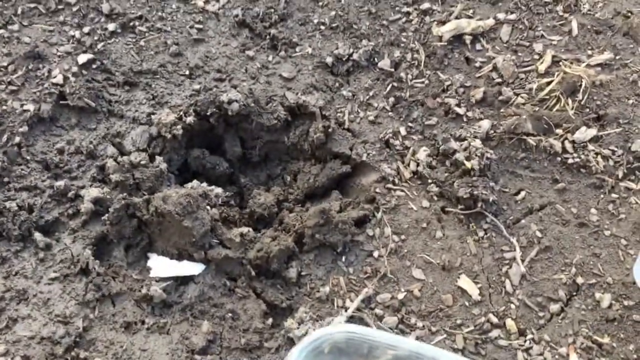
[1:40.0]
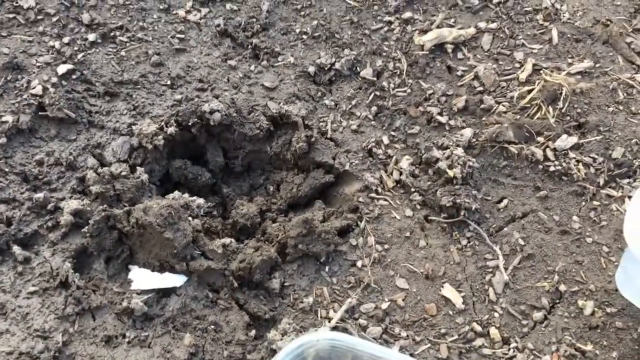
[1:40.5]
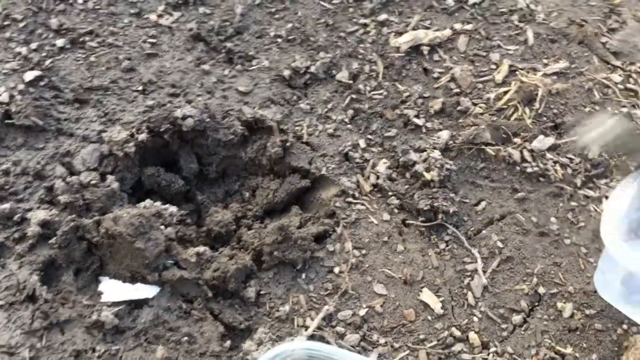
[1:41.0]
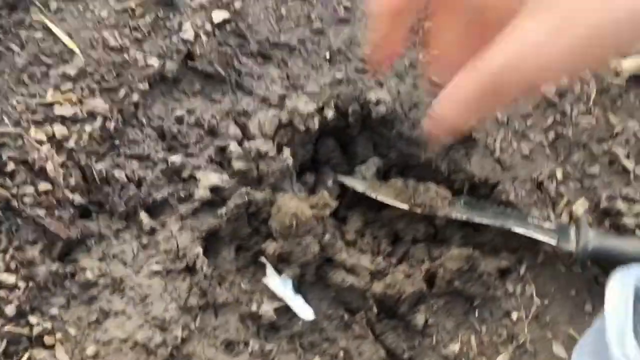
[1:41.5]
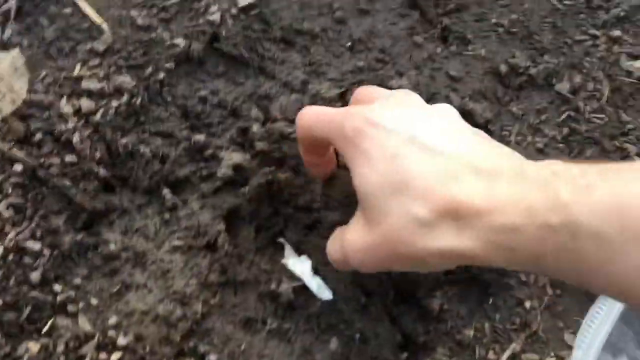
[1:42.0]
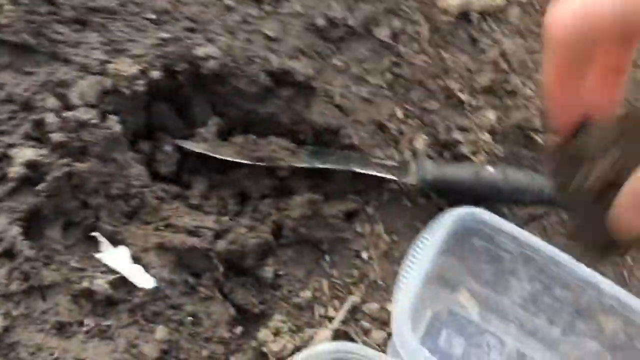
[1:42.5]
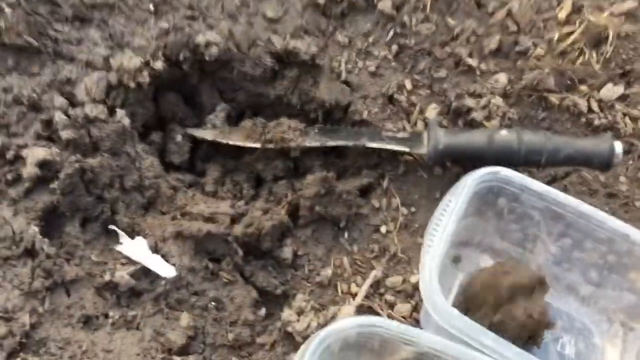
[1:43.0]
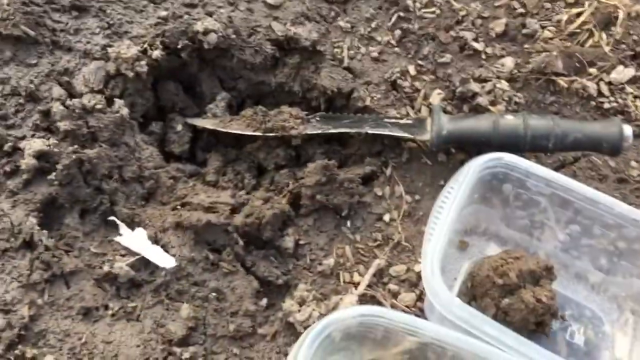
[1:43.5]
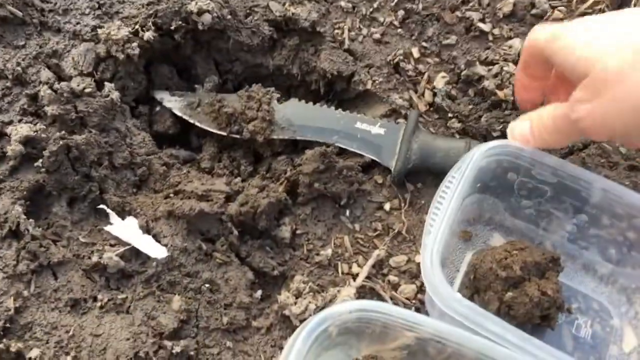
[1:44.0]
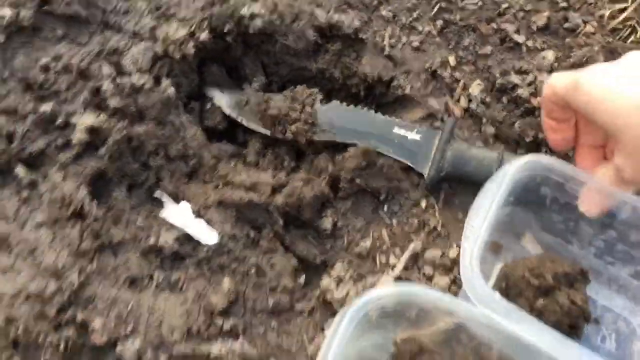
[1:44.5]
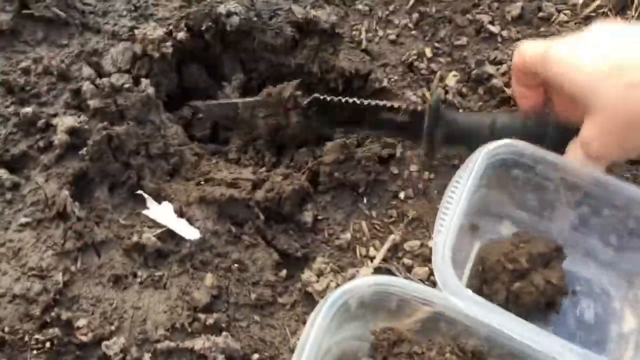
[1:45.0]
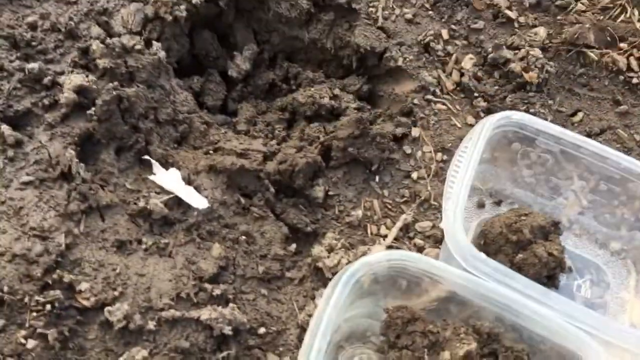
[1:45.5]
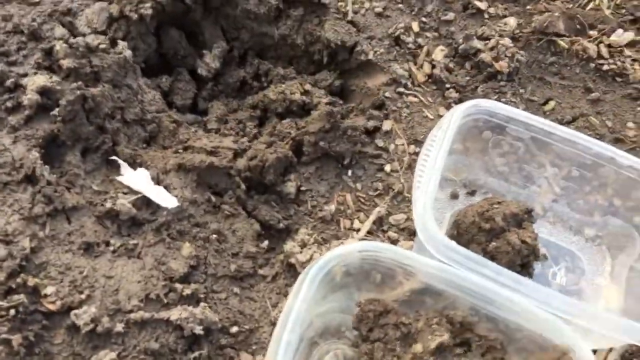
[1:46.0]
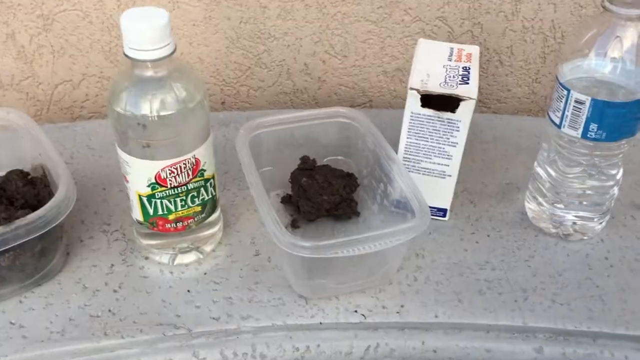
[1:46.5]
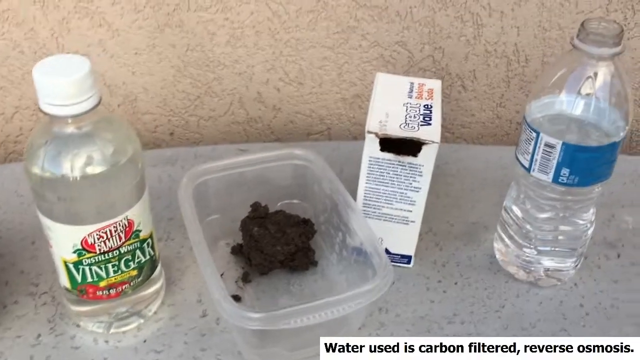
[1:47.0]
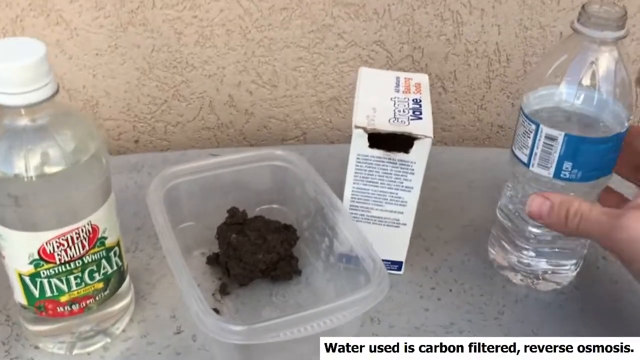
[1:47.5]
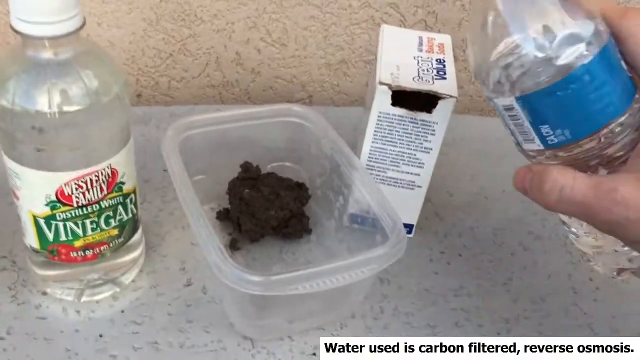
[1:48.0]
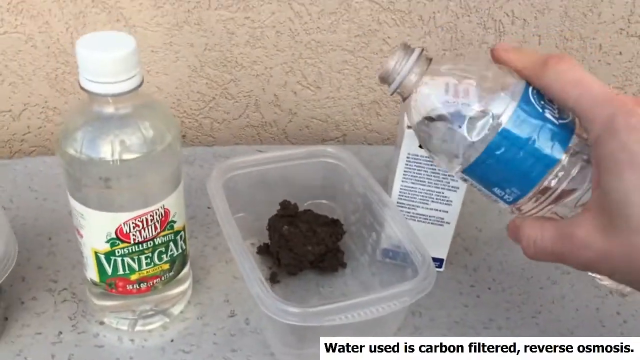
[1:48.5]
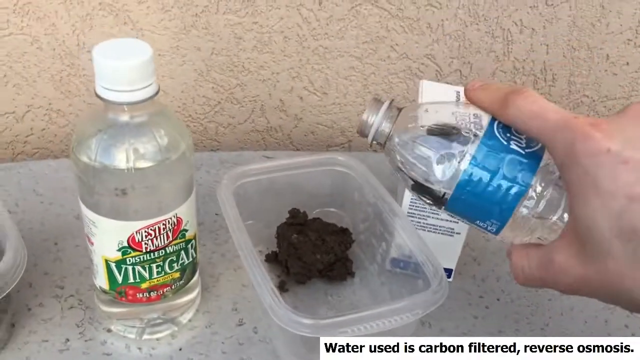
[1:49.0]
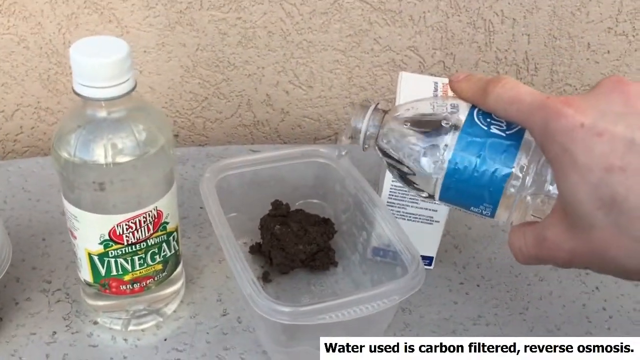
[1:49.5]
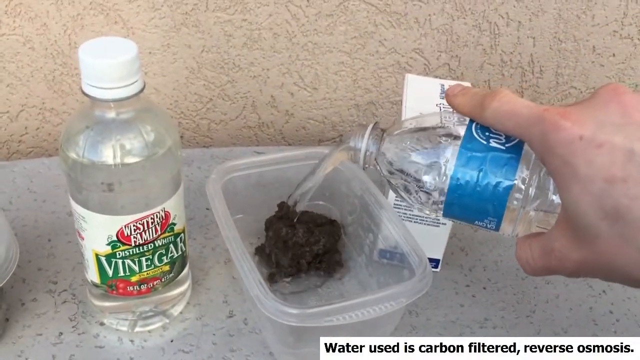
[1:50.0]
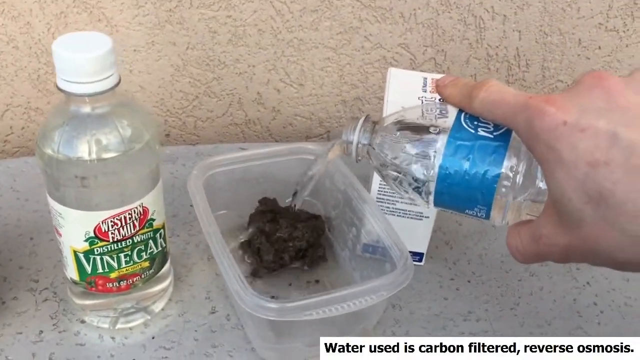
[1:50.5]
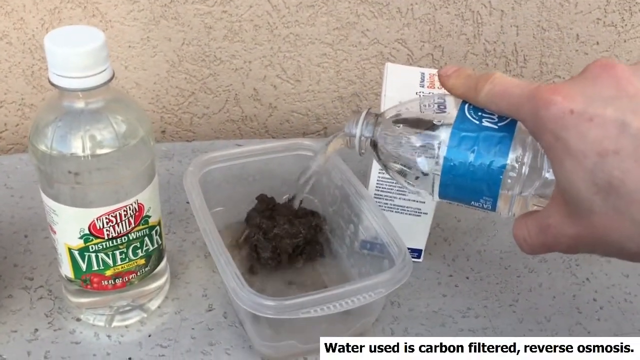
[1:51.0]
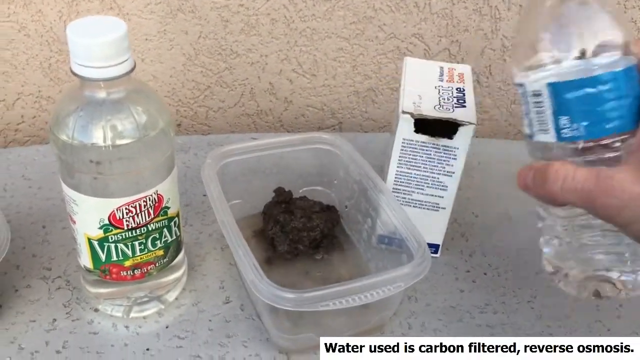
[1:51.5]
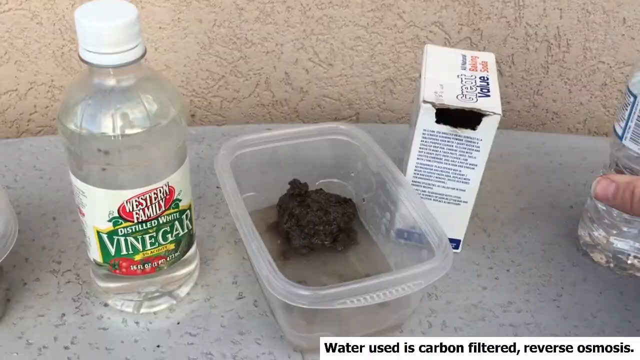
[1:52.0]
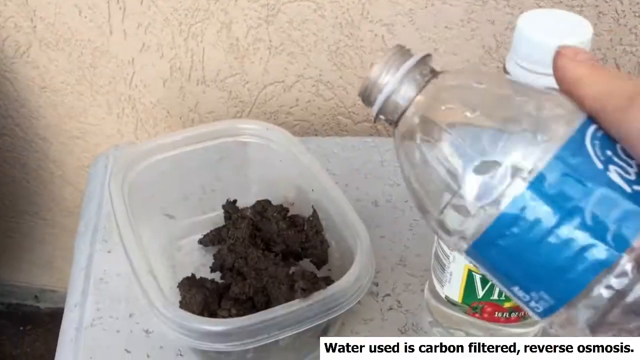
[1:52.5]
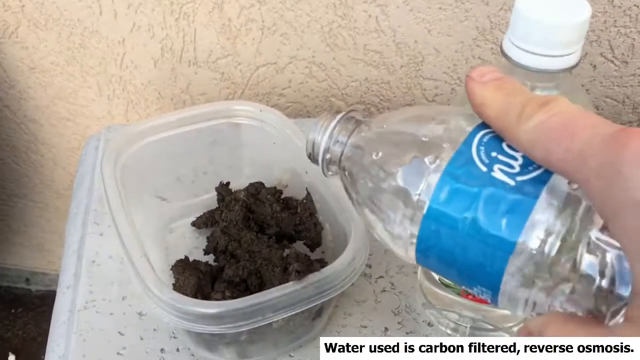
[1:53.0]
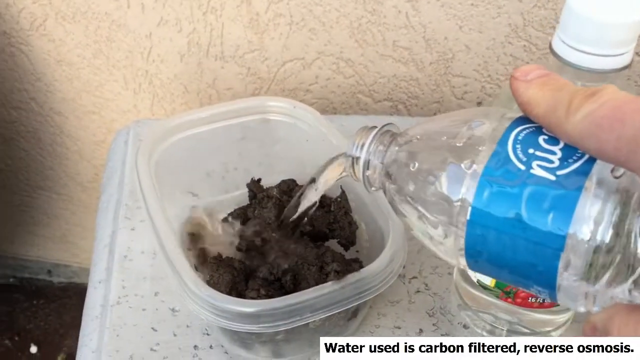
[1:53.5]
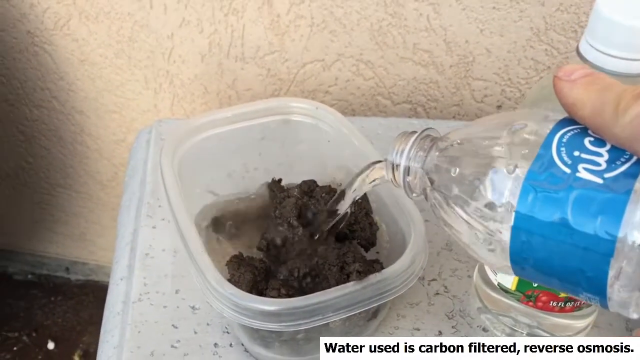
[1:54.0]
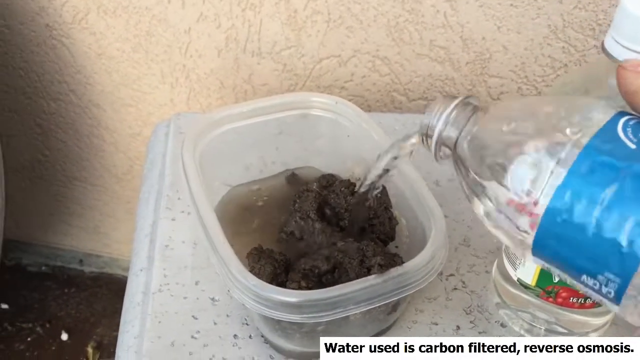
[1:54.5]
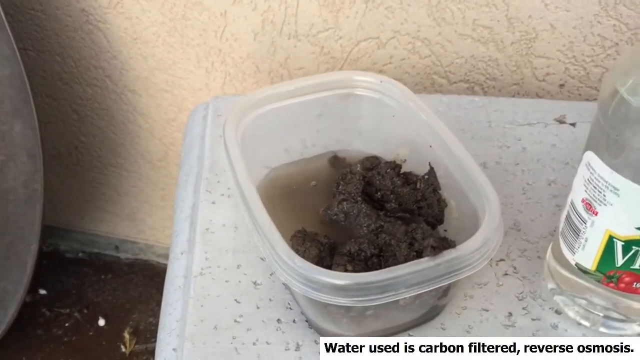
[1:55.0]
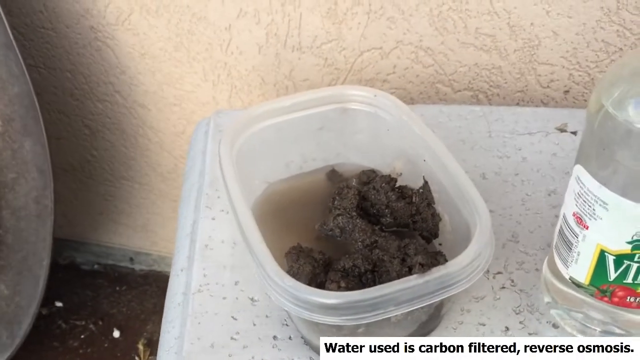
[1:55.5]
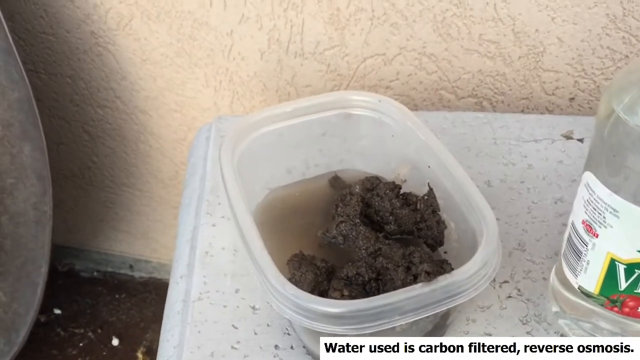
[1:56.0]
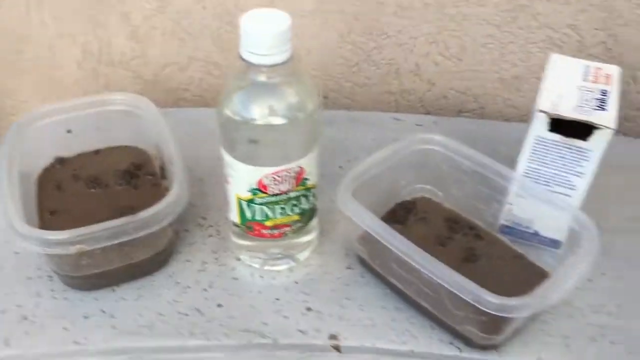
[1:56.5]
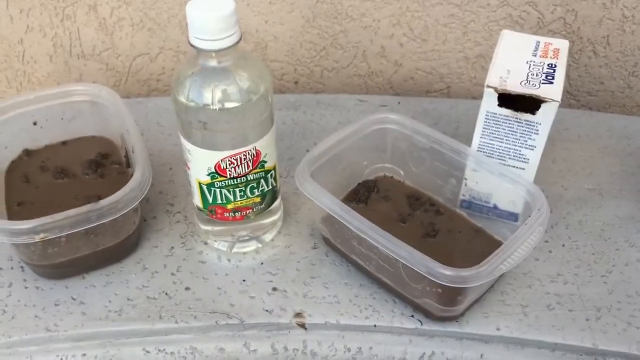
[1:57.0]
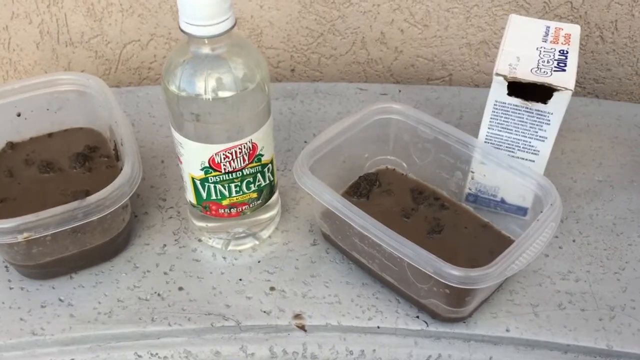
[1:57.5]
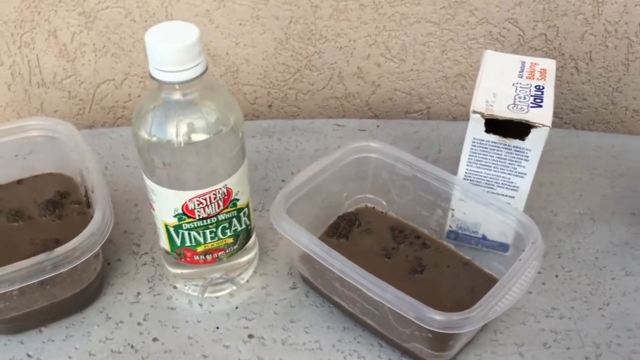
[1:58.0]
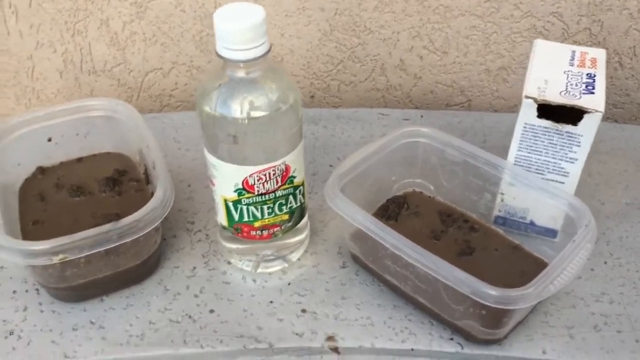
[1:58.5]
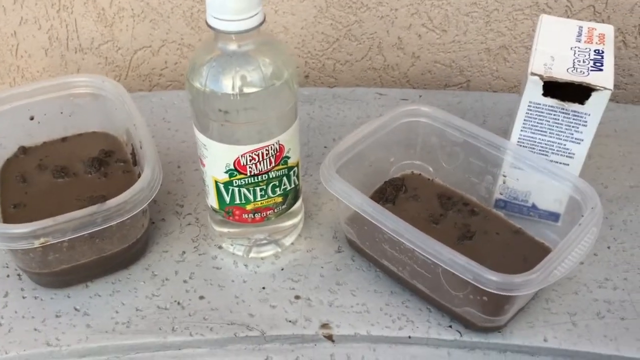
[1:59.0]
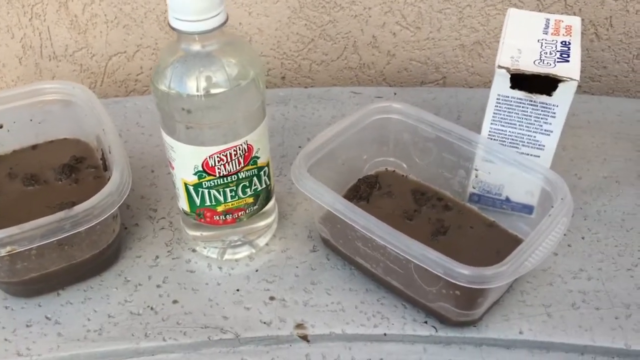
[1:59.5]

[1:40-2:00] The camera looks down at ground with very little grass on it; it looks like mostly wet soil. There is a small hole where a knife has gone in and pulled out some soil. A Caucasian person's right hand reaches in from the right side of the screen. With the knife in the hole, the person reaches down, grabs a clump of soil and moves it to a small Tupperware. The knife in the soil looks like a boot knife. Two small Tupperware containers are on the ground in the bottom right of the screen. The man then picks up the knife with his right hand. The view cuts to a tabletop with vinegar on the left, the Tupperware with the dirt in it to its right, an open box of Great Value, presumably baking soda, next to that, and water to the right of that. The man picks up the water with his right hand and pours it into the Tupperware over the soil. The view then switches to another small Tupperware on the left side of the table, and the man, holding water in his hand, pours water into it, filling it about a tenth to a quarter of the way.